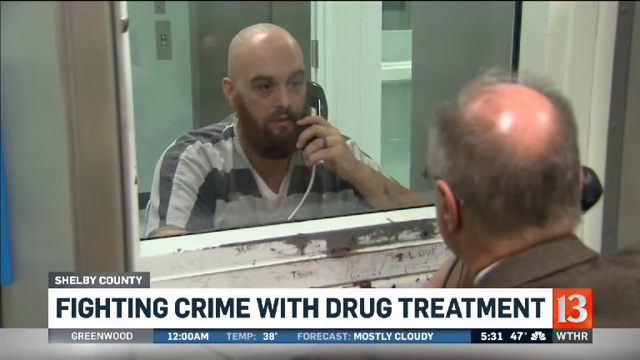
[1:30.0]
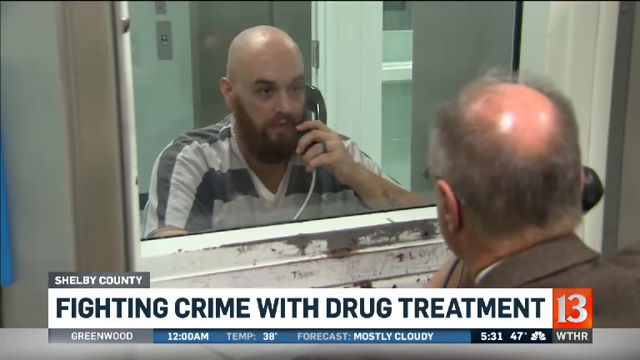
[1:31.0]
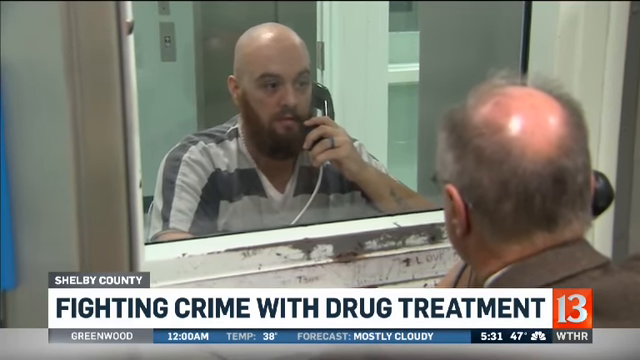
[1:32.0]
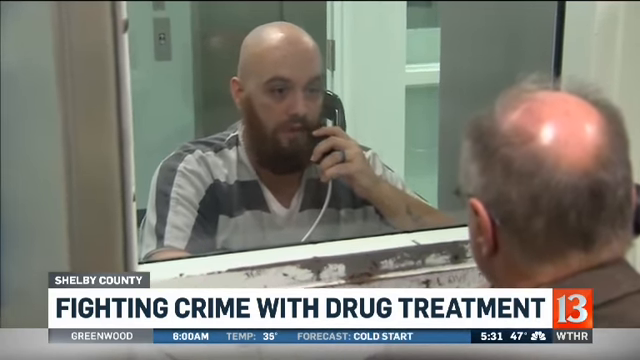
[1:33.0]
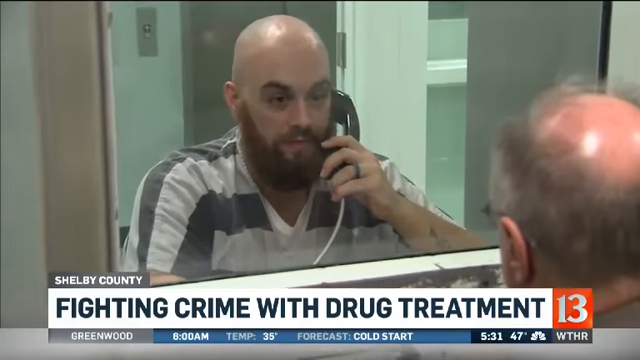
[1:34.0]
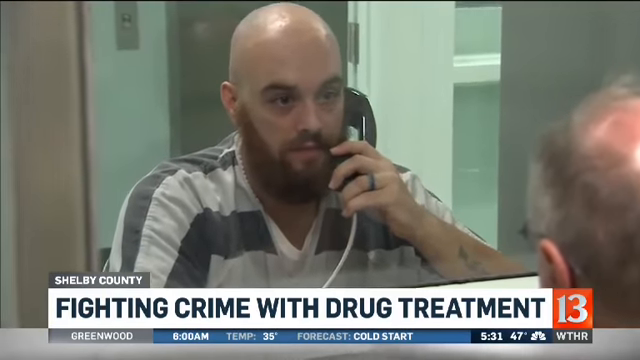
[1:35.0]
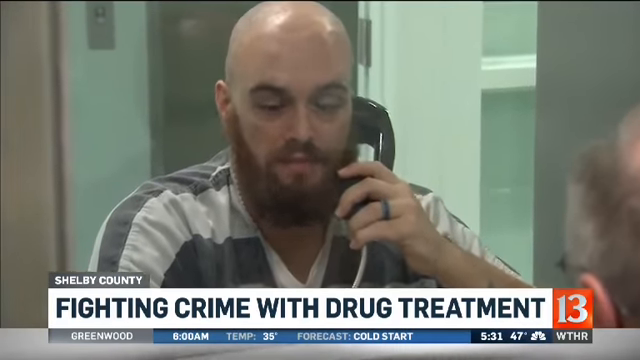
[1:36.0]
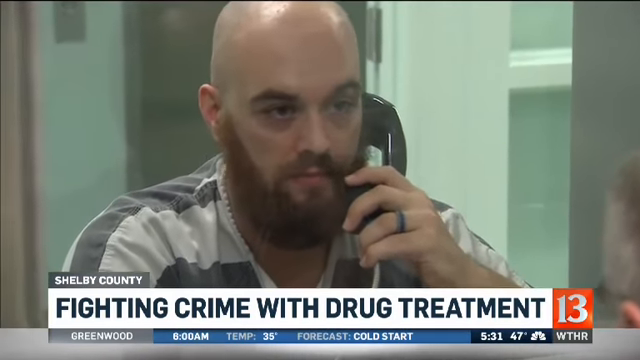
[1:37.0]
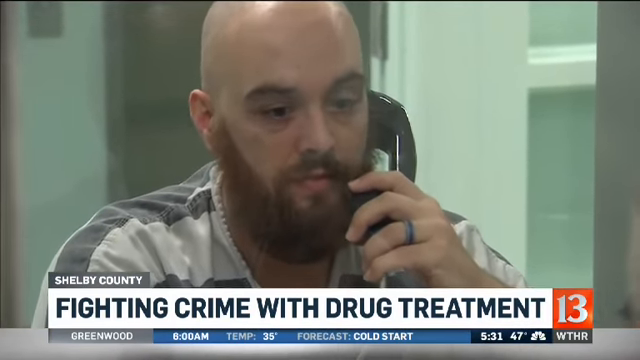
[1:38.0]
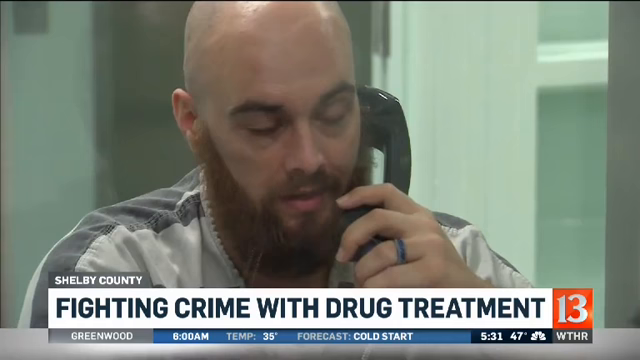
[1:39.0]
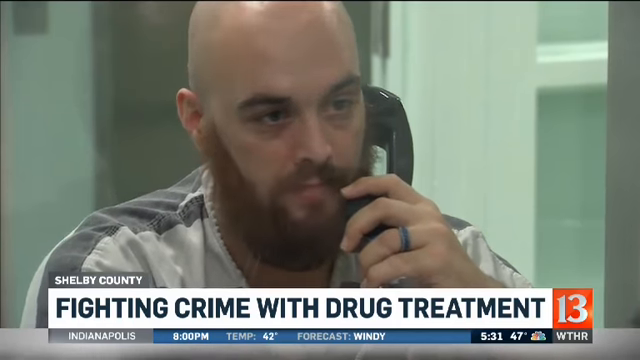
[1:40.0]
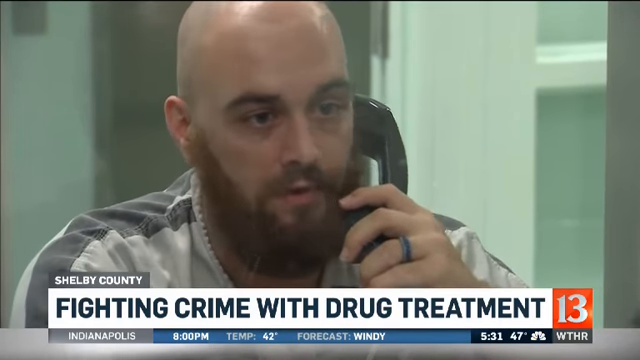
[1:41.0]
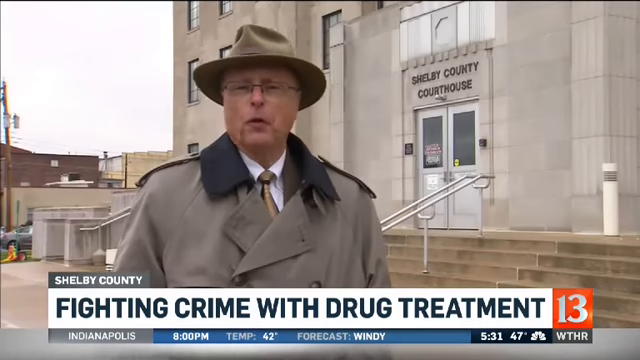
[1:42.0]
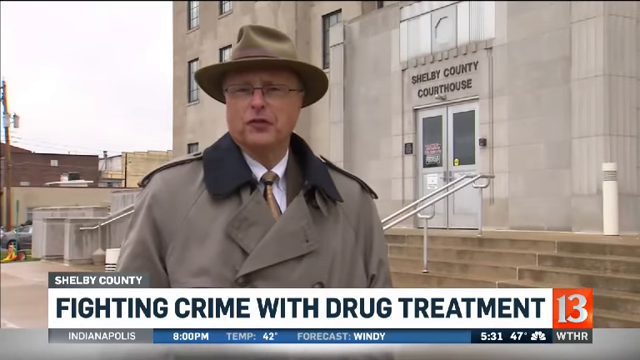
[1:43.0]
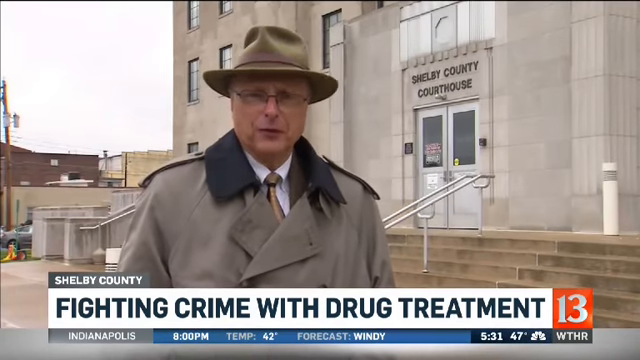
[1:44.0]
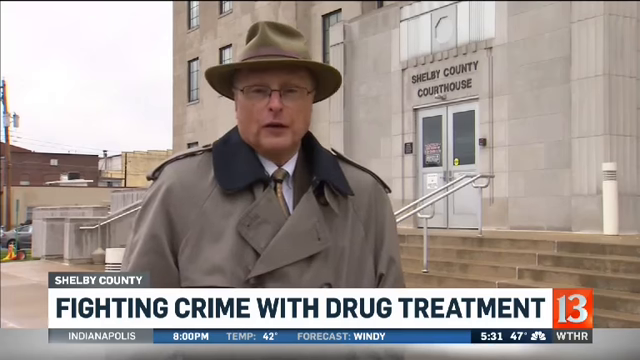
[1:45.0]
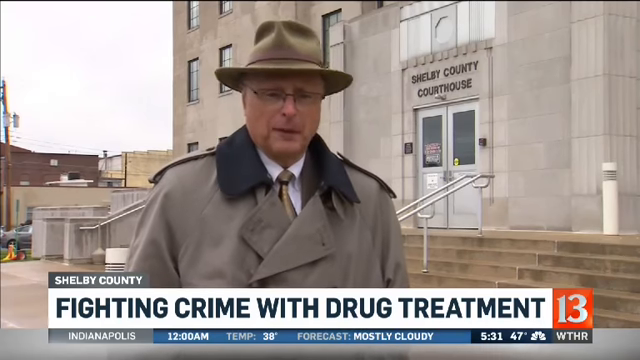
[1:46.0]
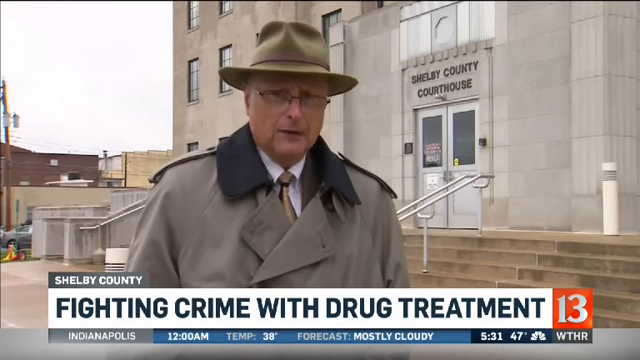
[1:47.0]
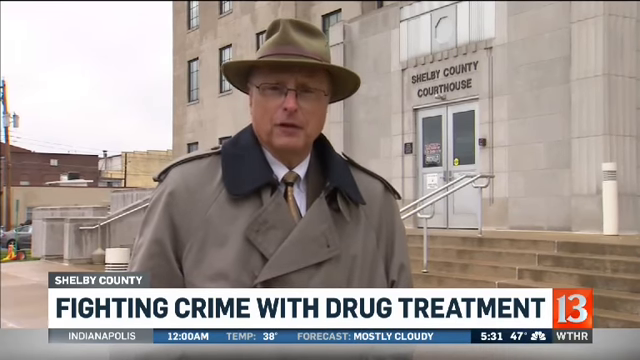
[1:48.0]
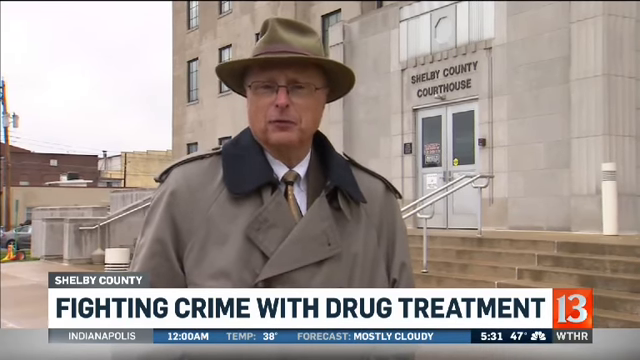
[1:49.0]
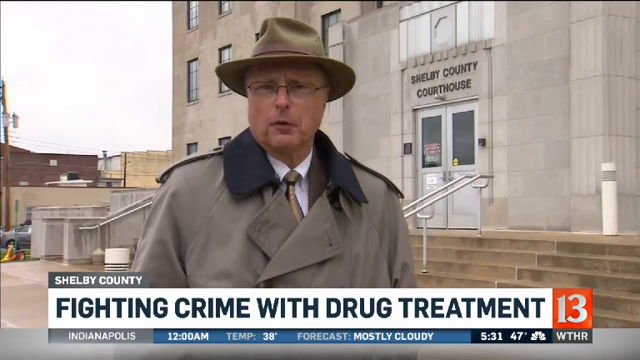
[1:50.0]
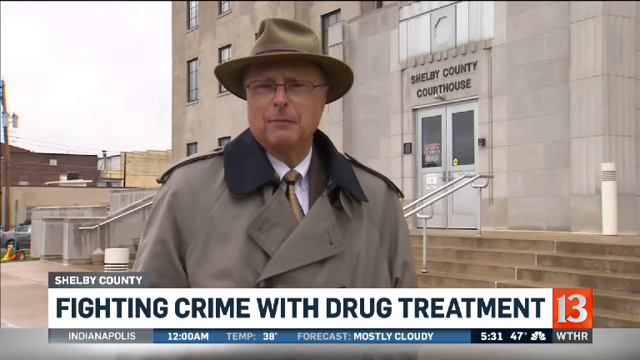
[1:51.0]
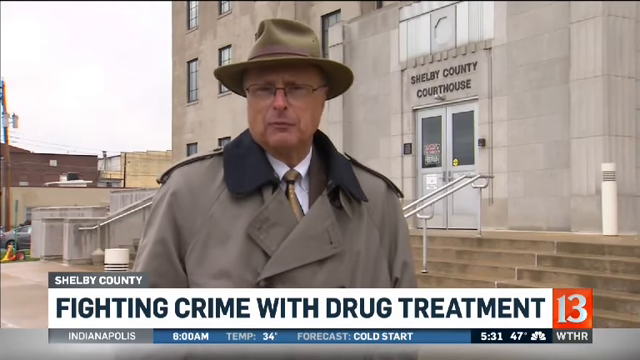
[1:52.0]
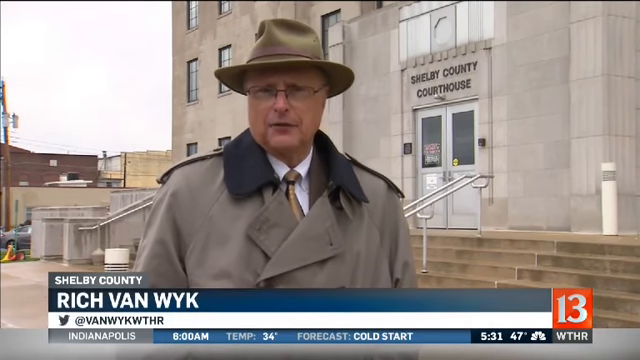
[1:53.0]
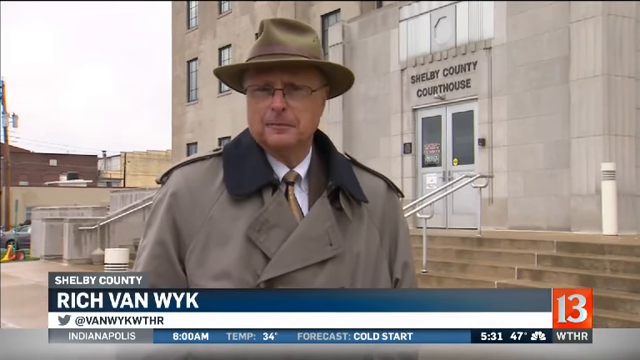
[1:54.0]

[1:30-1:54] The interview continues between the prisoner and a man in a brown suit who wears glasses, whose hair is visibly thinning on top and turning grey. The window between them is old, with scratch marks on the side of the man in the suit. The prisoner speaks as the camera zooms into his face, and he makes facial expressions. The video then cuts to the man in the Inspector Gadget-style brown trench coat continuing his briefing outside; he shrugs his shoulders and keeps speaking, and his name is shown as Jan Van Wyk before the video ends.